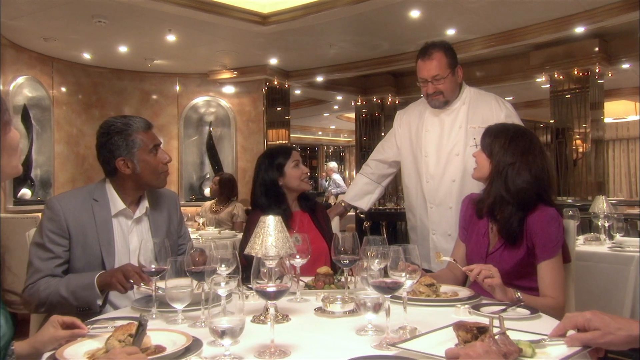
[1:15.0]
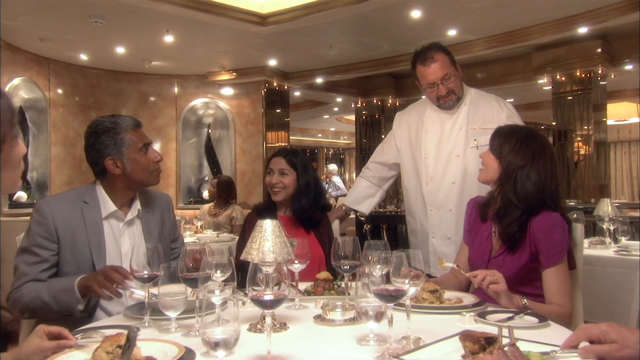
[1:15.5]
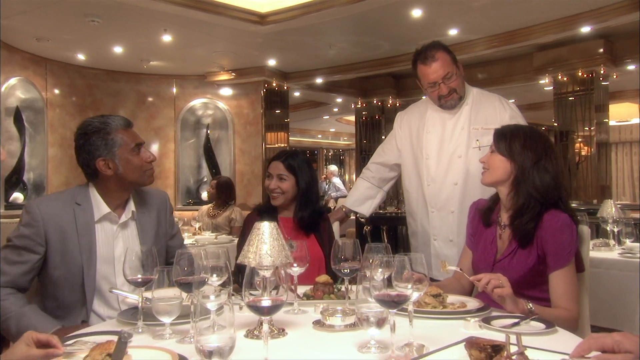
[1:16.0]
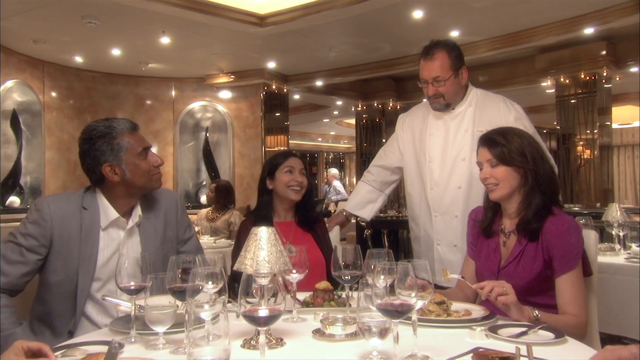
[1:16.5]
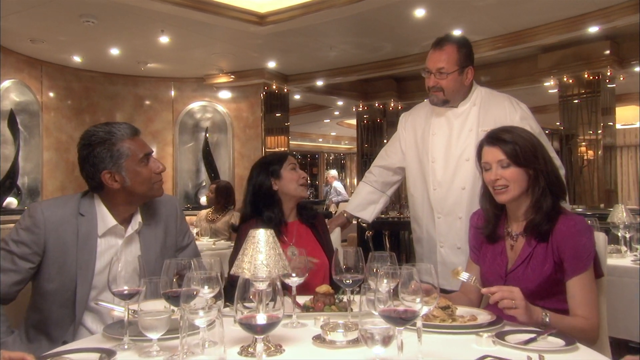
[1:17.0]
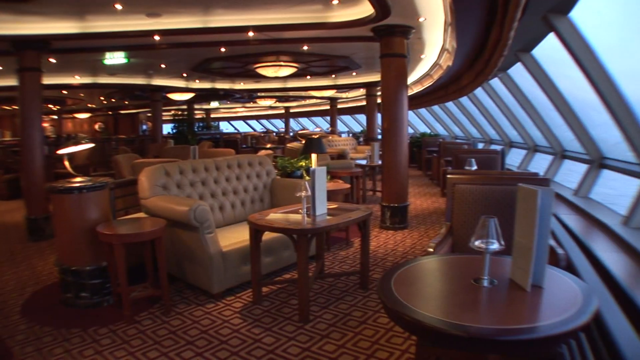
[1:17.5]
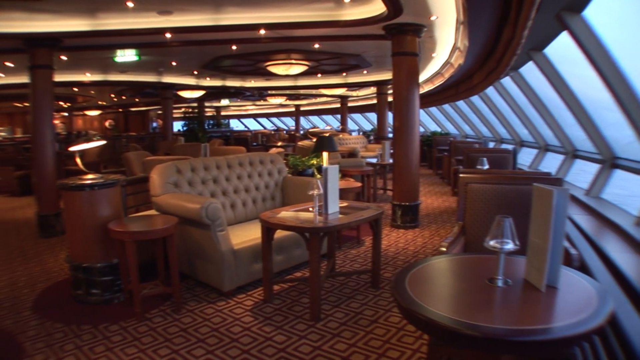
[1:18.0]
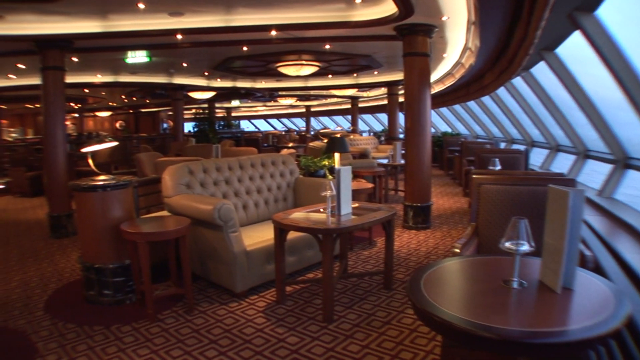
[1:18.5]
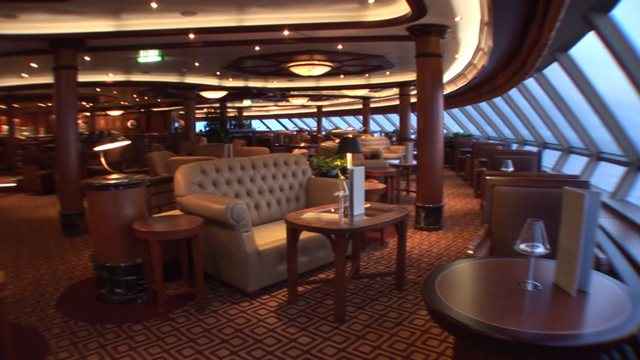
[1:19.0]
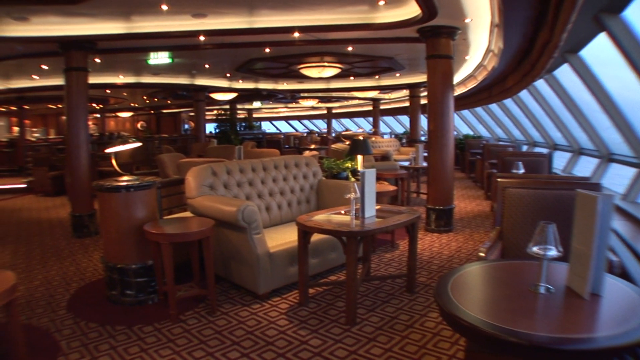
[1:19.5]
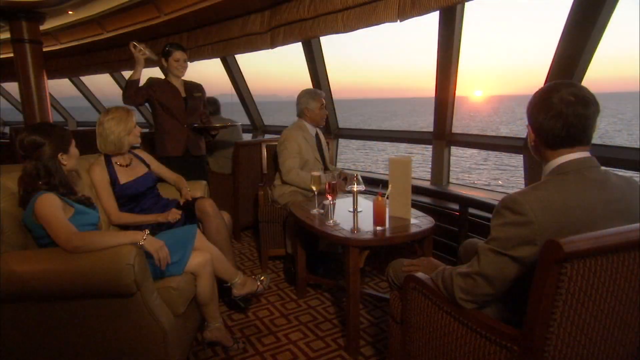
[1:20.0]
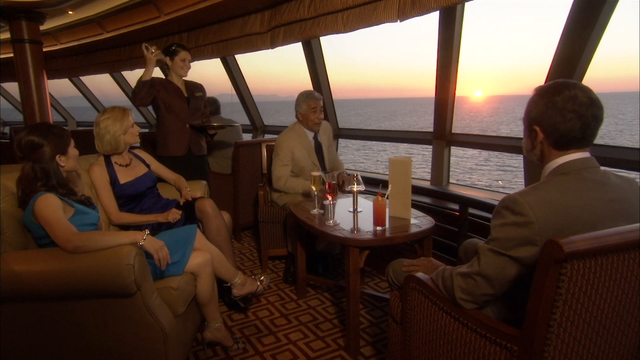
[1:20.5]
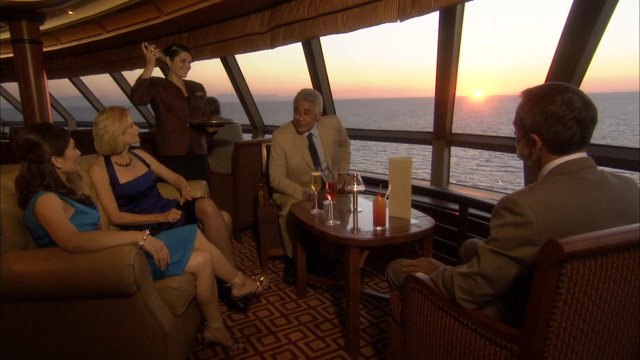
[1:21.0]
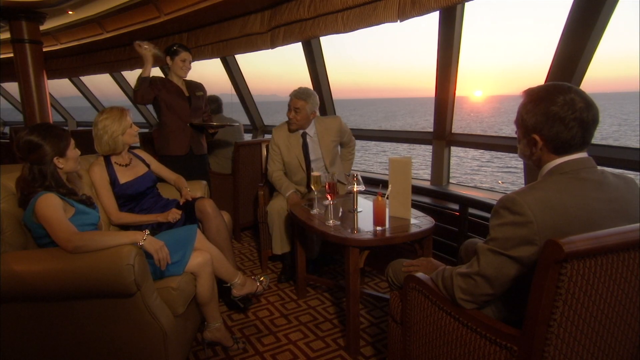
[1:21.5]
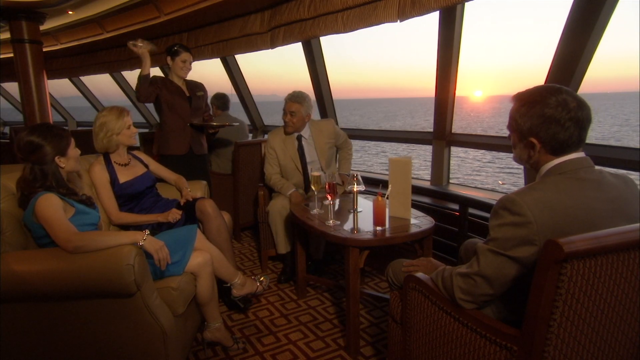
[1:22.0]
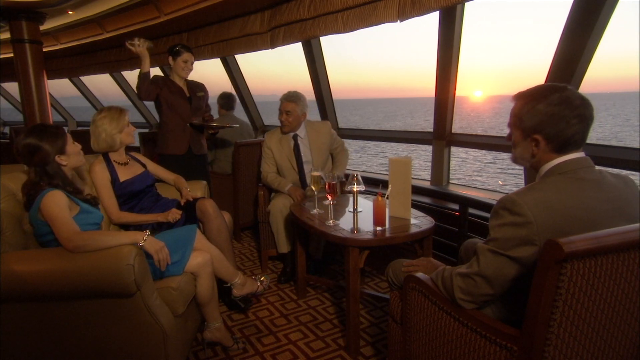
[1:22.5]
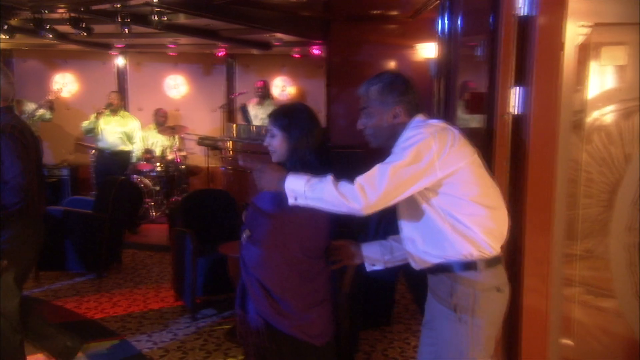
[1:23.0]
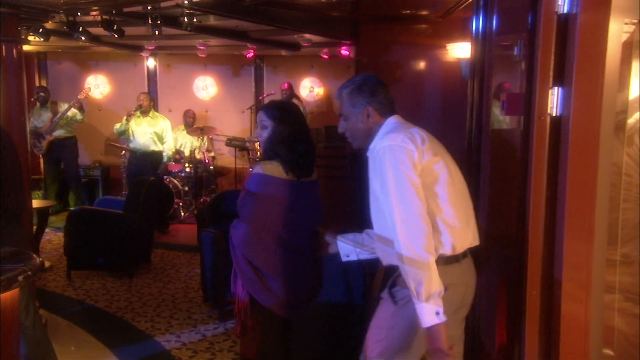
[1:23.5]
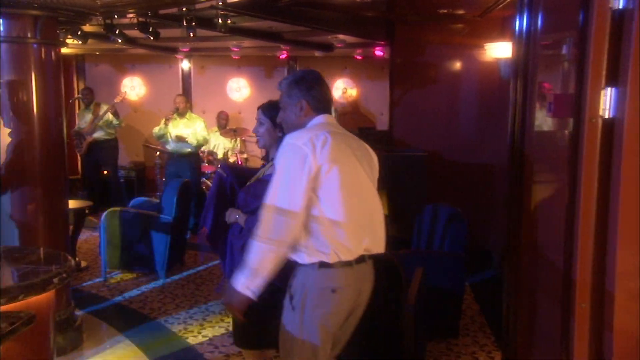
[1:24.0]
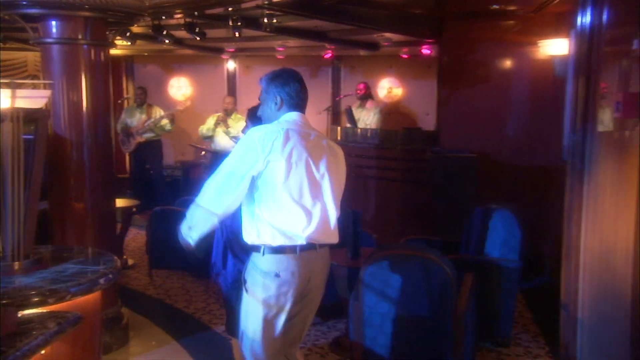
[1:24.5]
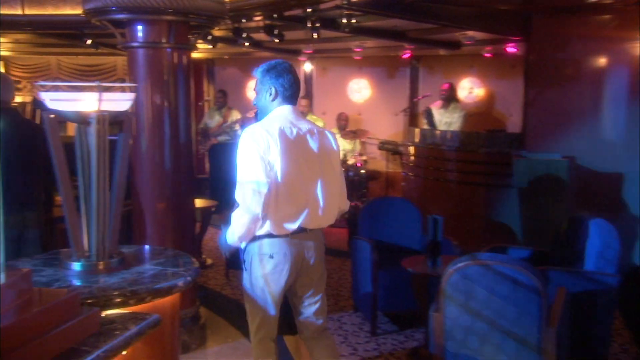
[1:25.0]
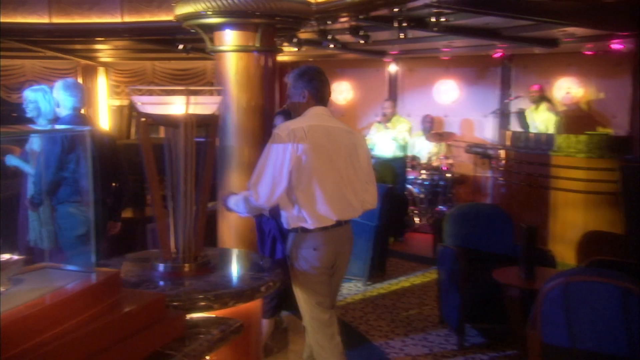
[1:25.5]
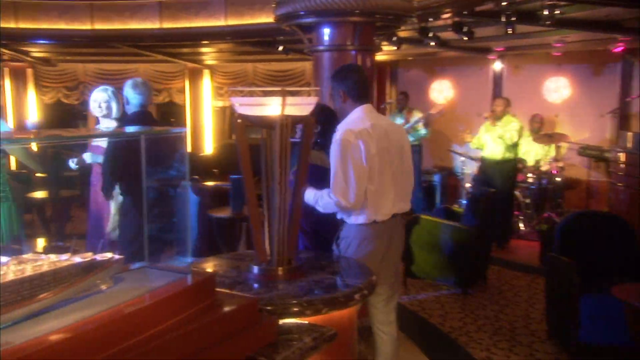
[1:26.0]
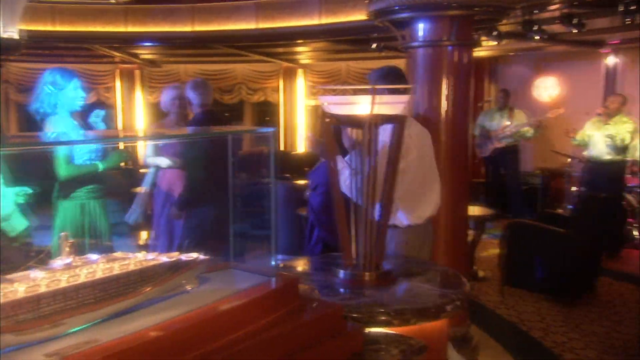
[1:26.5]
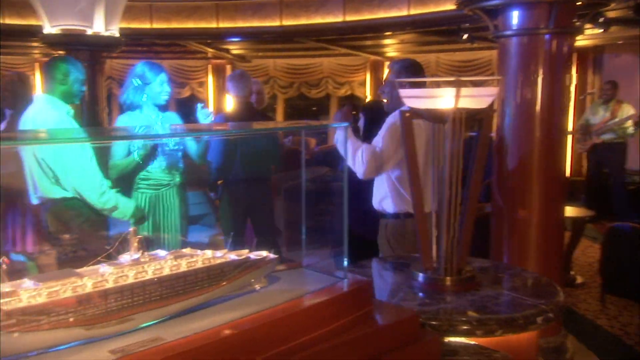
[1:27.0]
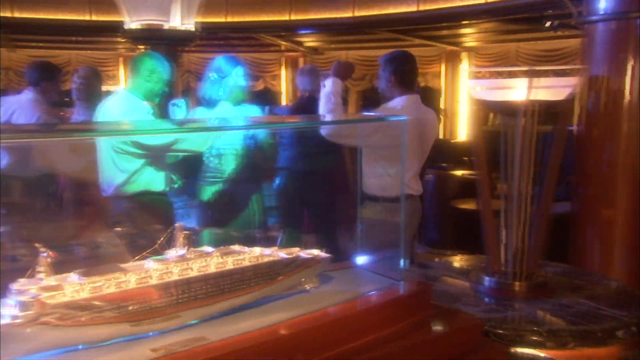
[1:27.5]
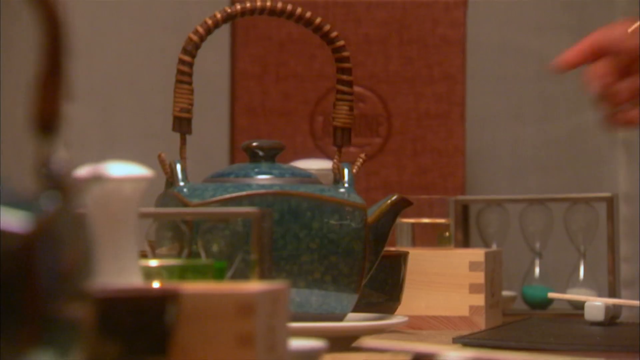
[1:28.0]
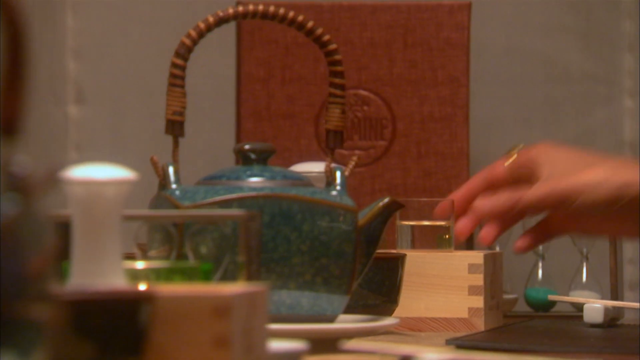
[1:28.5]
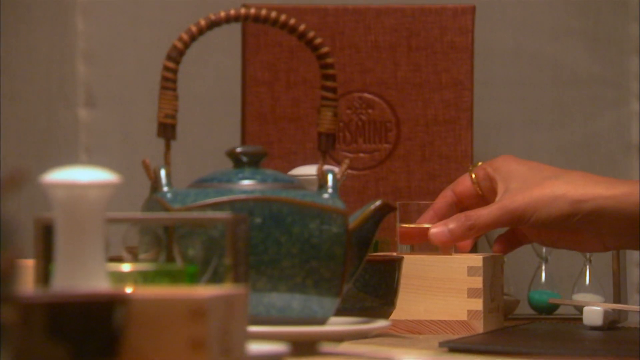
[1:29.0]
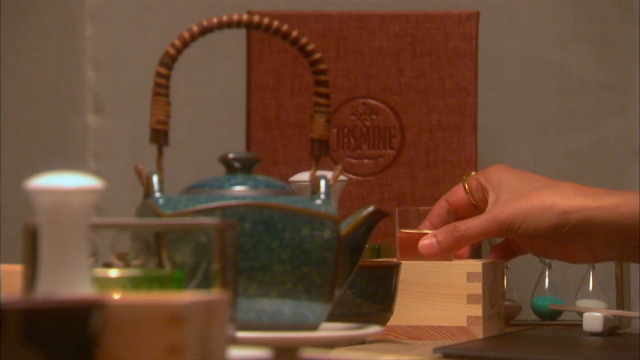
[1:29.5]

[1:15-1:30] A waiter or a chef in a white coat stands in front of a table of diners, including a gentleman in a gray suit and white shirt and two women, one in a pink or red dress and the other in a purple dress. They enjoy a meal while the waiter or chef speaks to them, in a formal setting with a white tablecloth. The scene changes to a lounge area where the couples are seated with drinks, looking out the windows of the cruise ship at the ocean, while a bartender stands behind them shaking a drink. Next, the couples go to a disco-type room and head onto the dance floor to dance to a band; they seem to be enjoying themselves, especially the man in the white shirt and the woman in a blue dress. A very short shot follows of what appears to be tea being served: a kind of green kettle with a brown handle is in the center of the shot, and a small drink is poured into a clear glass.